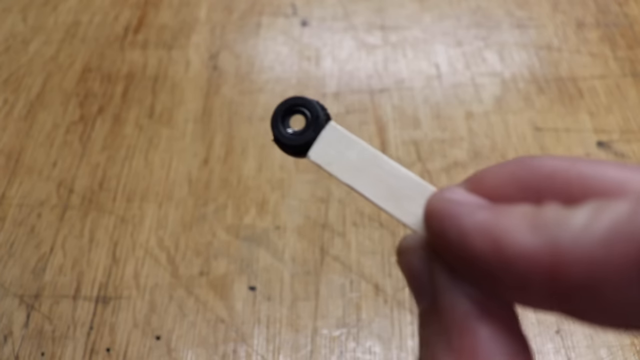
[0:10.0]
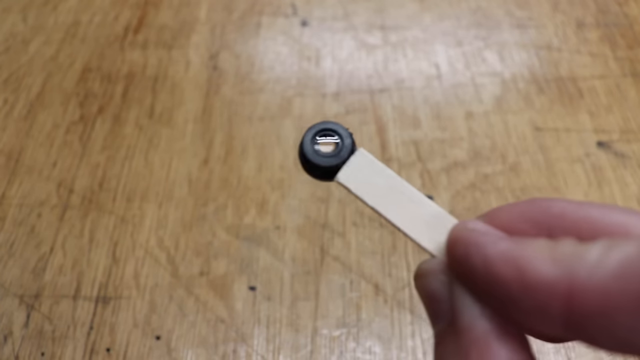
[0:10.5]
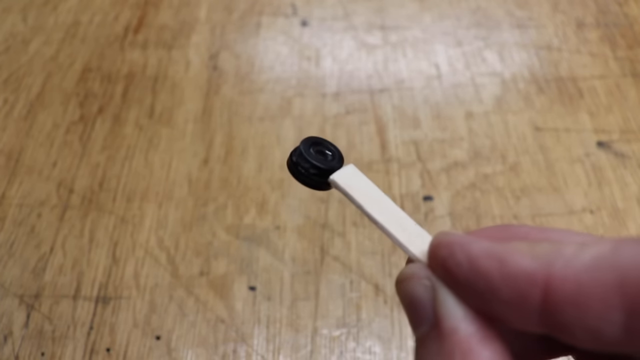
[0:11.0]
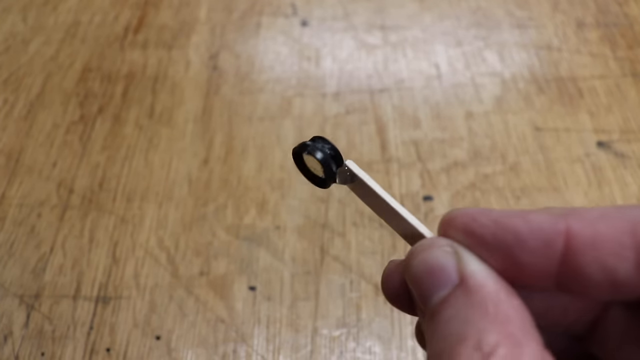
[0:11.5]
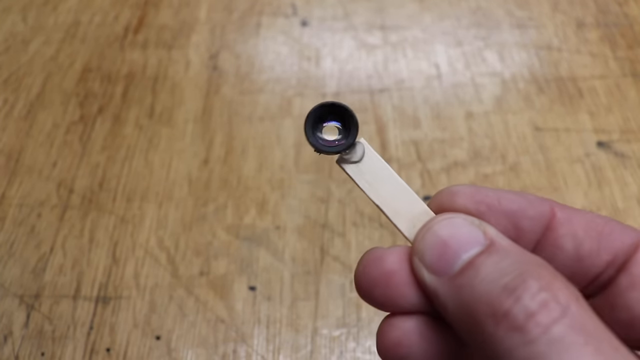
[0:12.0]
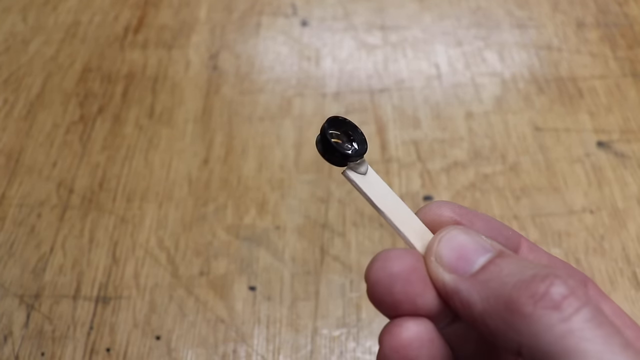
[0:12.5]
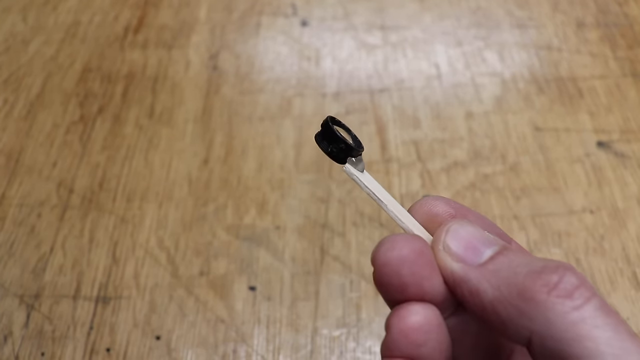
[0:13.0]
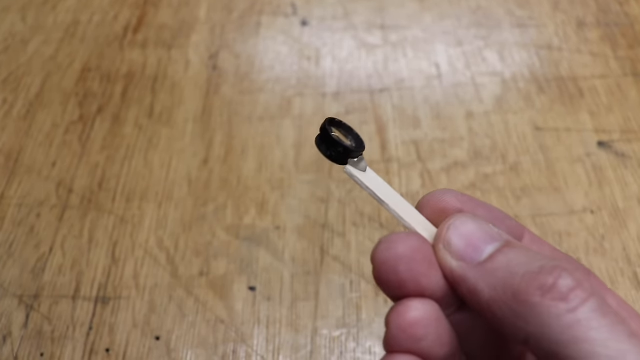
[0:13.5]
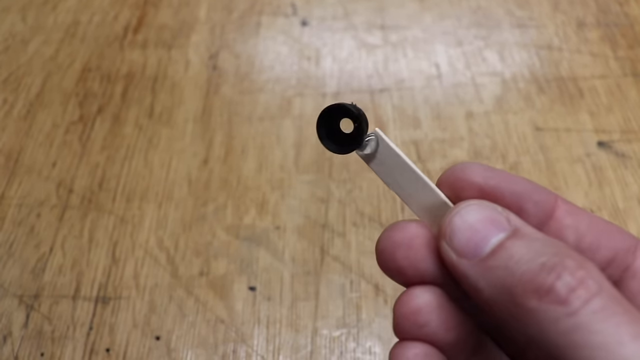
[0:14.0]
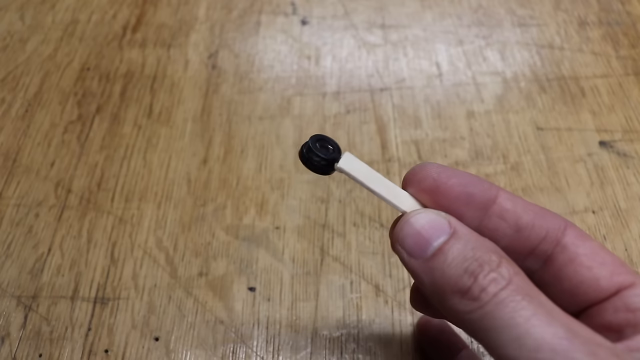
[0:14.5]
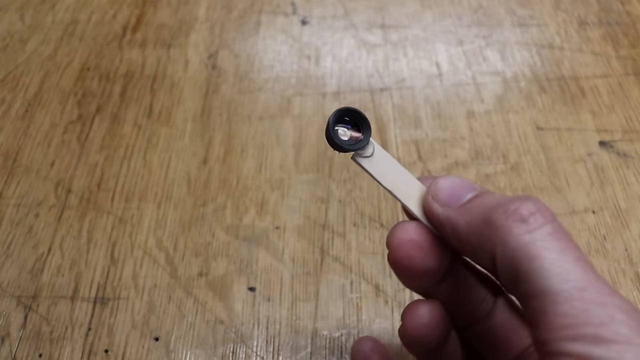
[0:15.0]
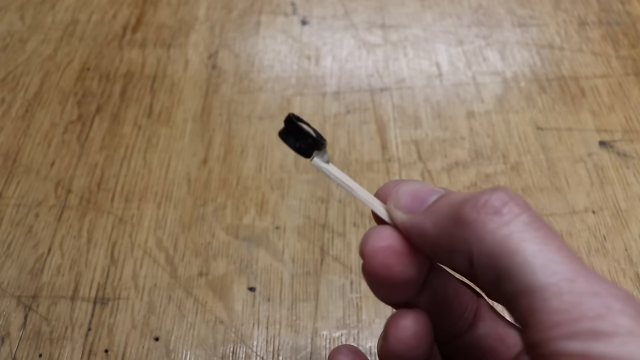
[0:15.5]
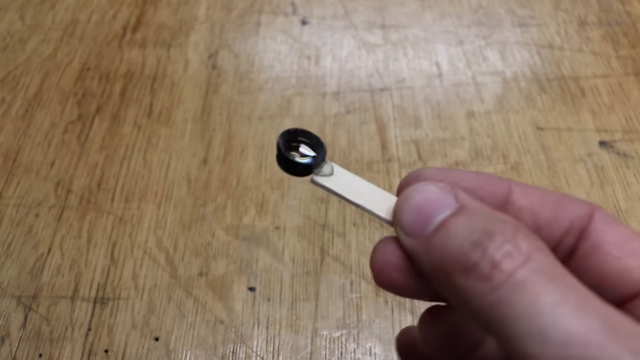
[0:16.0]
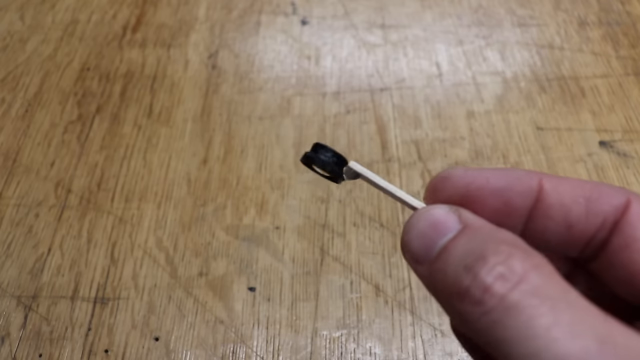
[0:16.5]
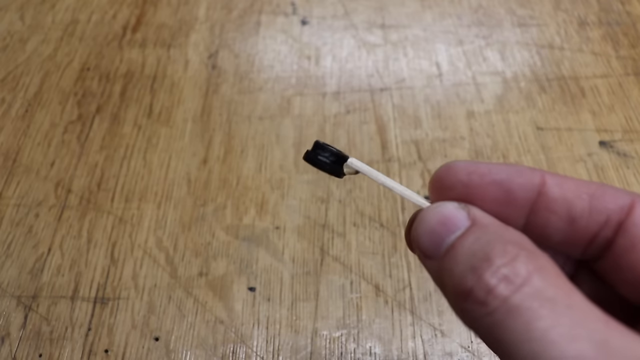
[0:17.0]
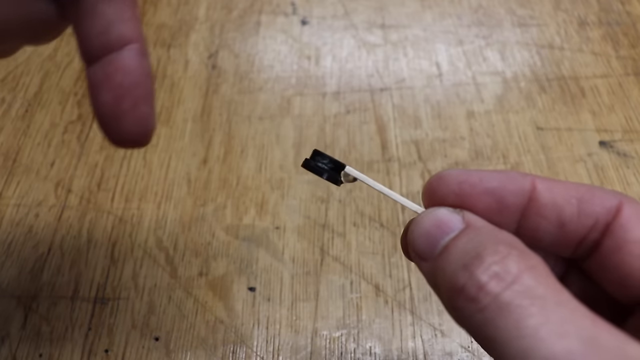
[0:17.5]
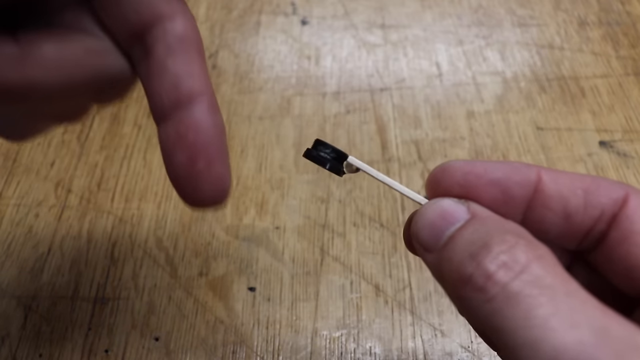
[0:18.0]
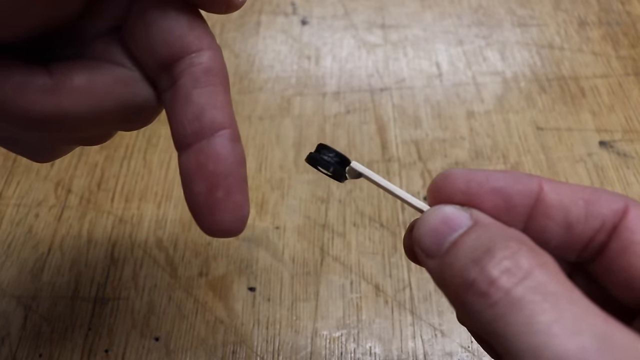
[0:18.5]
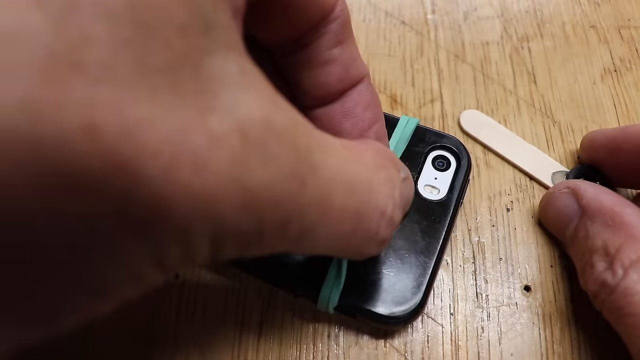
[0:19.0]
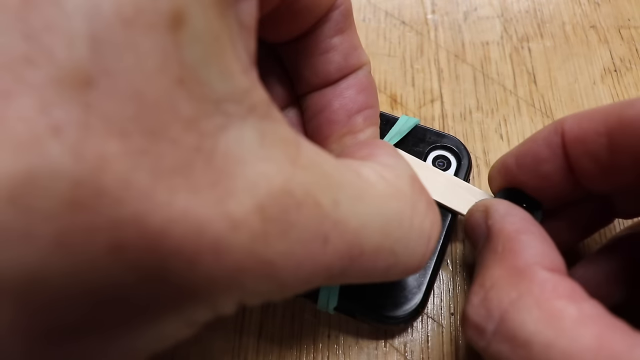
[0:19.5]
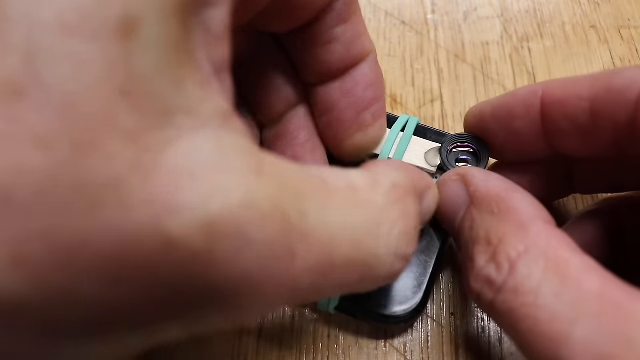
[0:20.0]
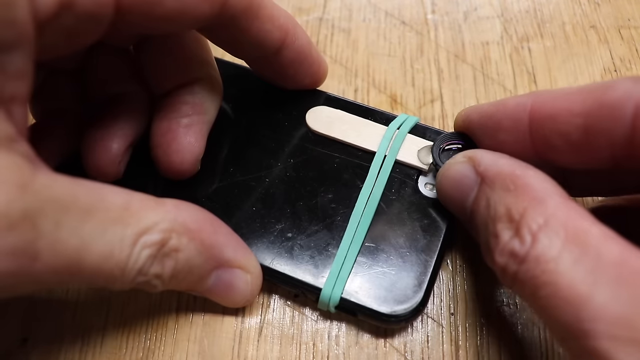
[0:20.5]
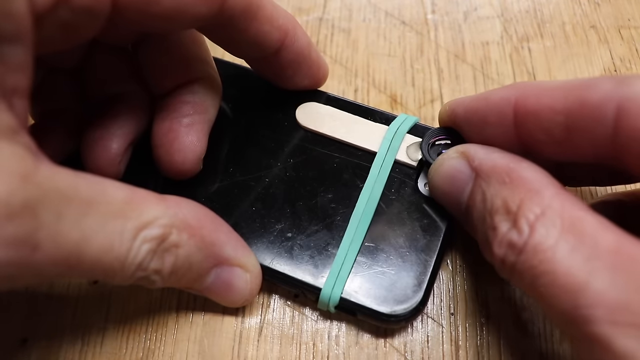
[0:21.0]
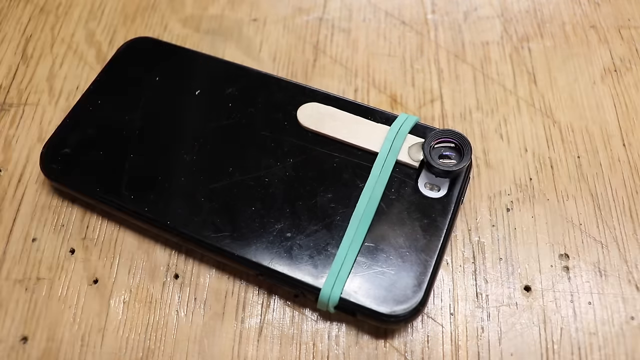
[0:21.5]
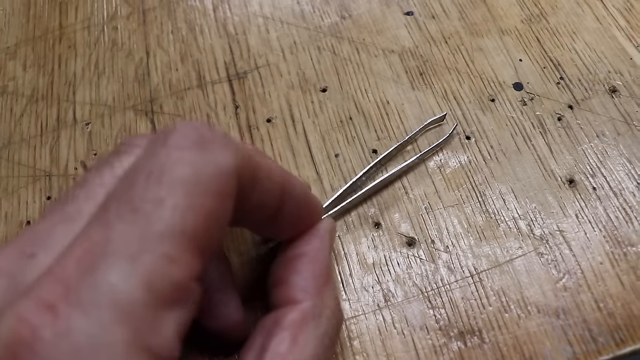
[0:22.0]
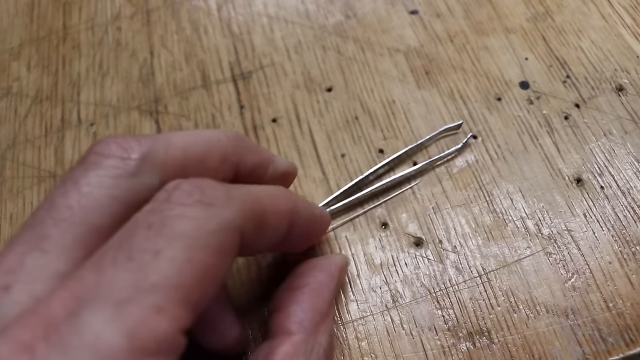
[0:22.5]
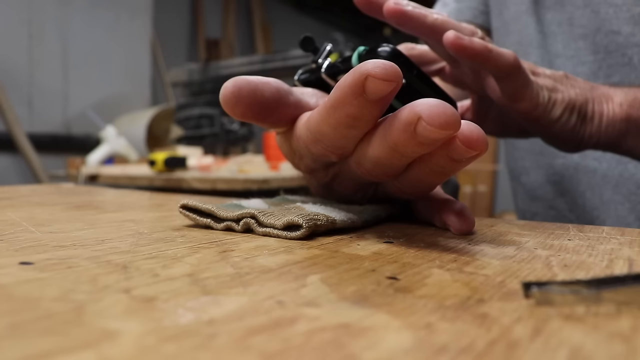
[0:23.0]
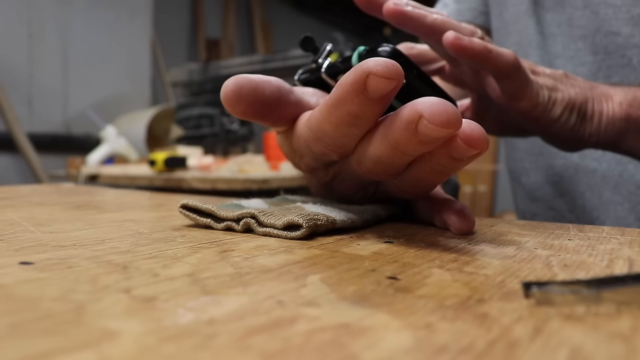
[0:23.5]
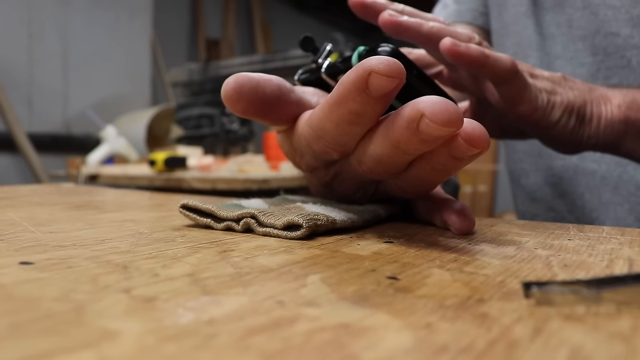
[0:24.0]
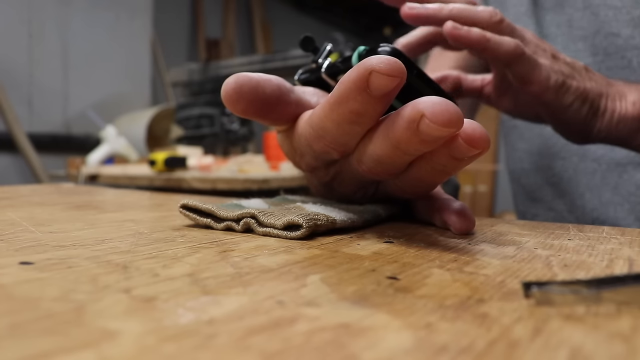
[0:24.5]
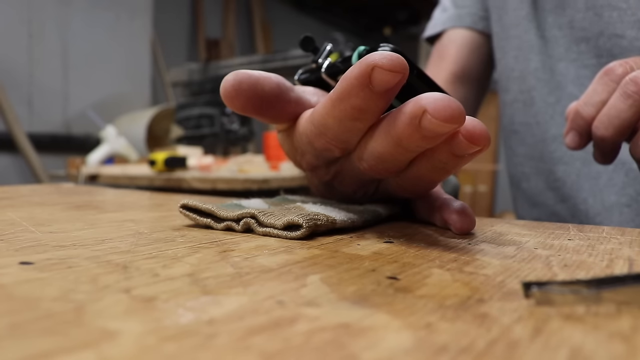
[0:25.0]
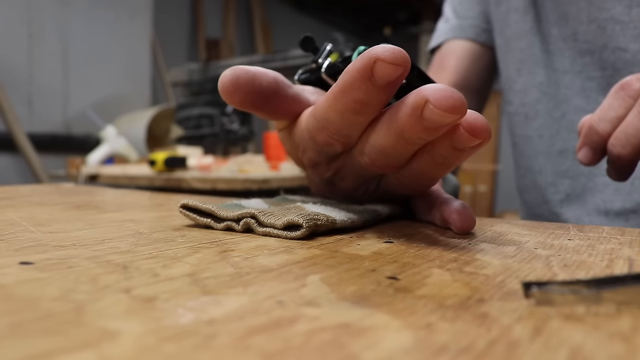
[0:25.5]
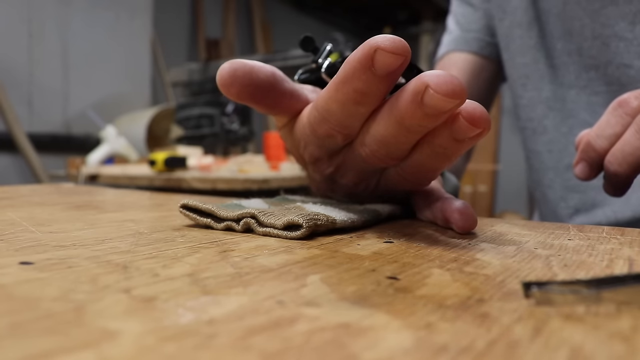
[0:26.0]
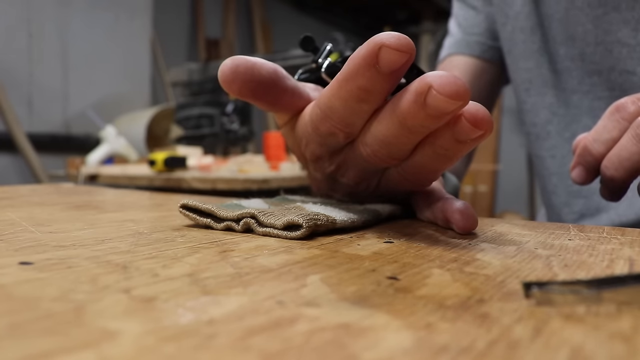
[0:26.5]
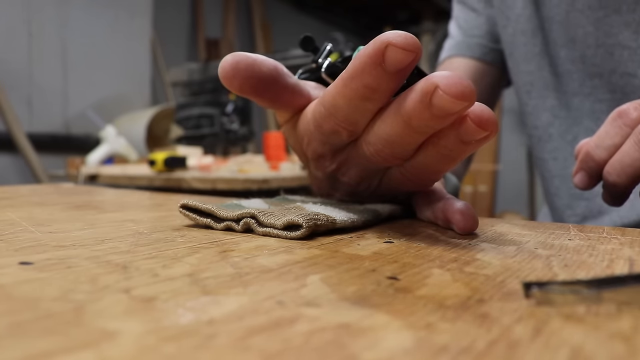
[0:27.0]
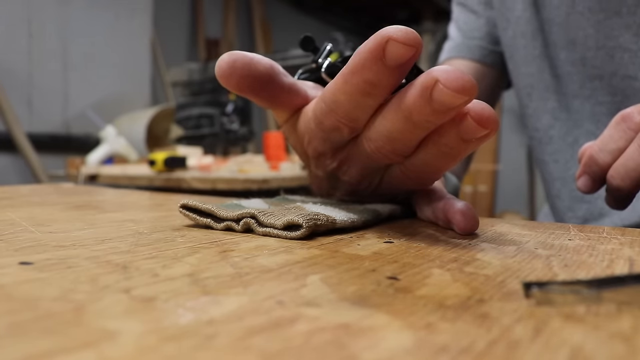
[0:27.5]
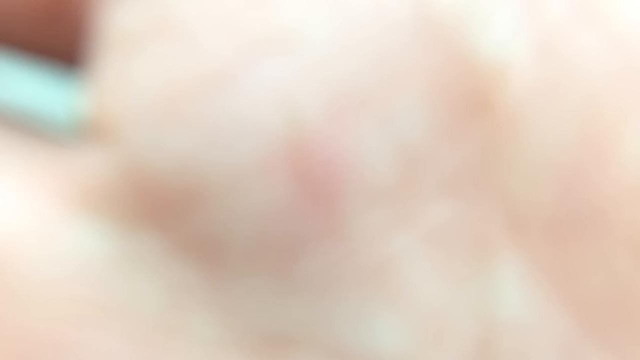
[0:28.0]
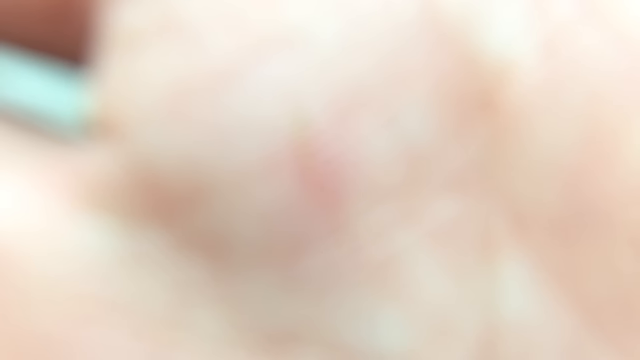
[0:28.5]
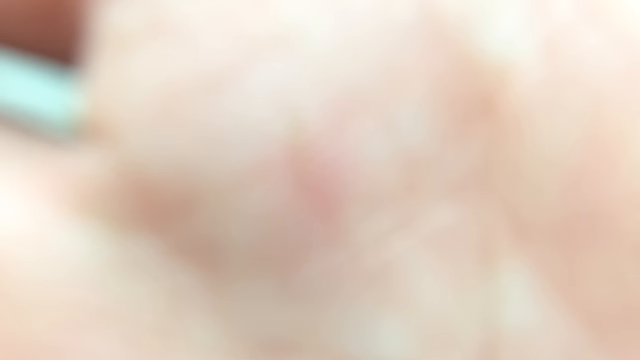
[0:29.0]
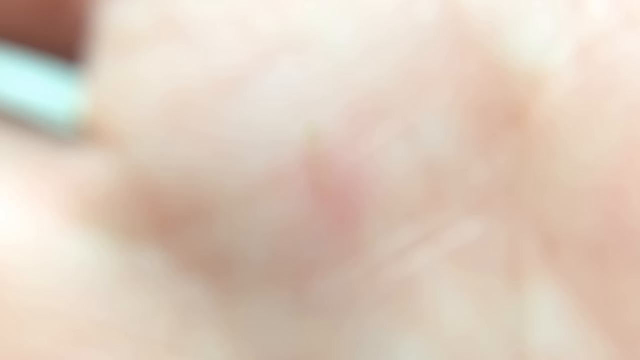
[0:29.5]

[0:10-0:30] The background is a wooden table. Over the table, someone's right hand holds a small piece of light tan wood with a small black lens on its tip, and the glue attaching the lens to the stick is visible. The person turns the stick over to the back and then to the front, showing how the lens is attached. Then the person's right hand appears in the shot and he points down with his index finger. The video cuts to another shot of the wooden table with a smartphone lying face down on it. A blue rubber band wrapped around the top of the iPhone holds the stick with the glued camera lens onto the back of the phone. A hand puts a pair of tweezers down on the wood table. He then picks up the smartphone and holds it in his right hand; only his right arm is visible.